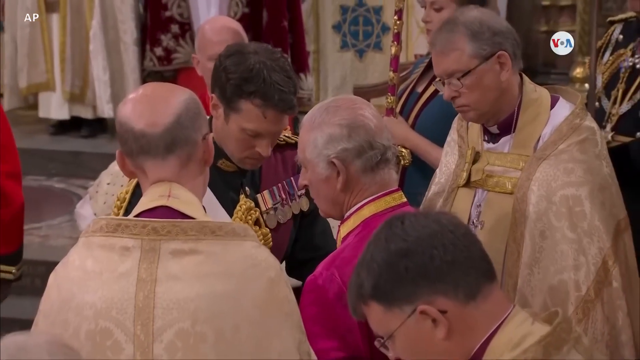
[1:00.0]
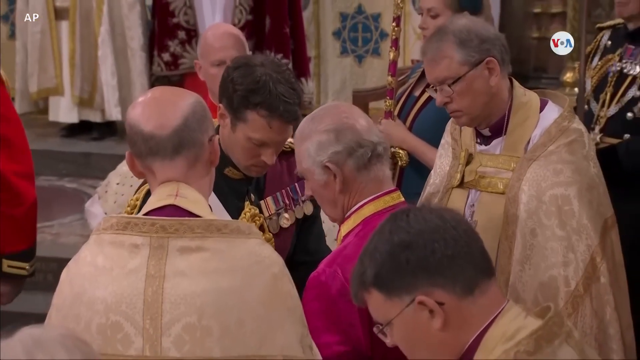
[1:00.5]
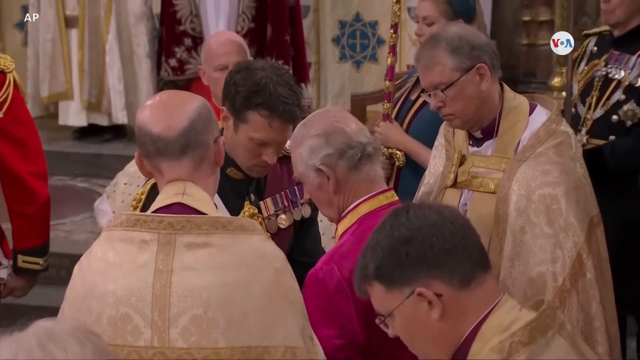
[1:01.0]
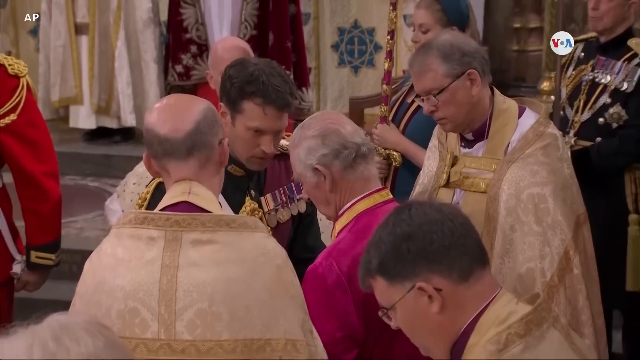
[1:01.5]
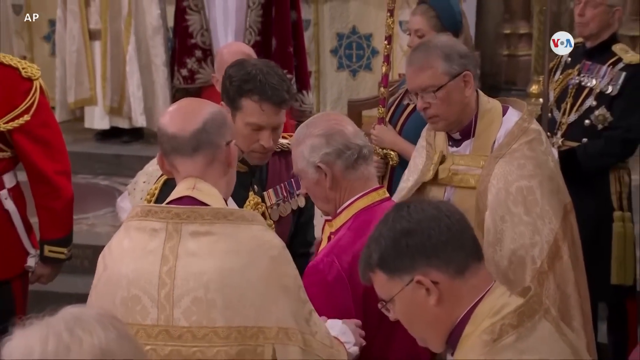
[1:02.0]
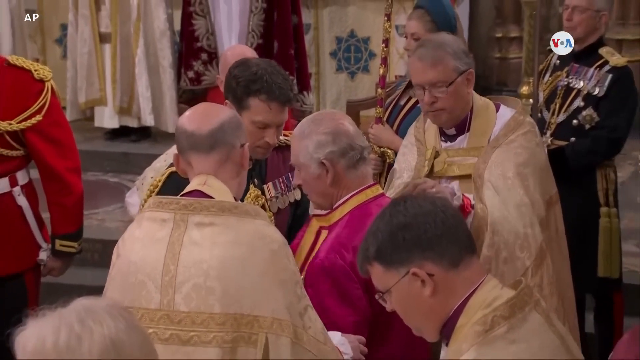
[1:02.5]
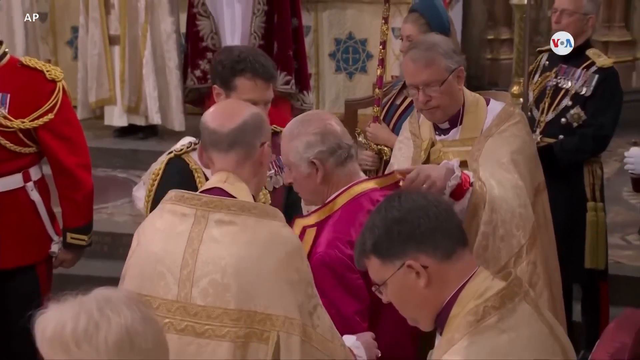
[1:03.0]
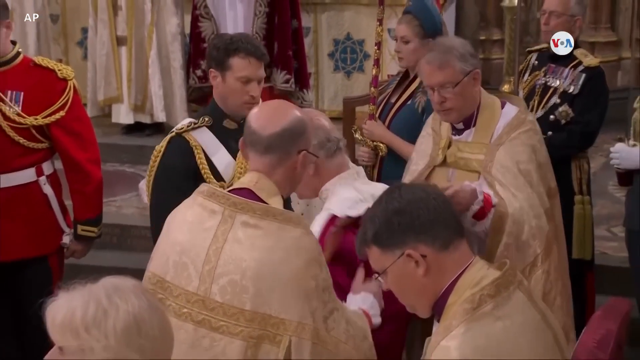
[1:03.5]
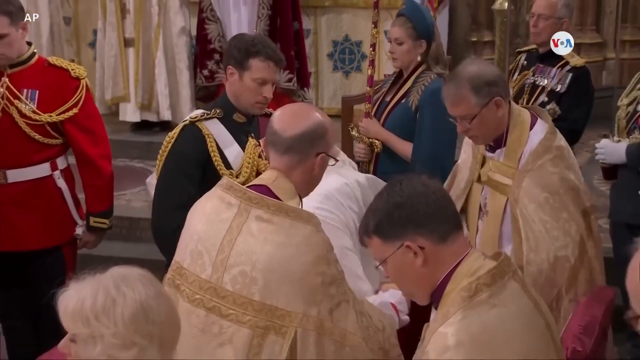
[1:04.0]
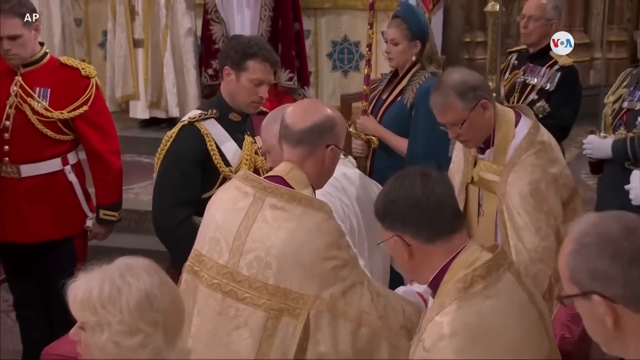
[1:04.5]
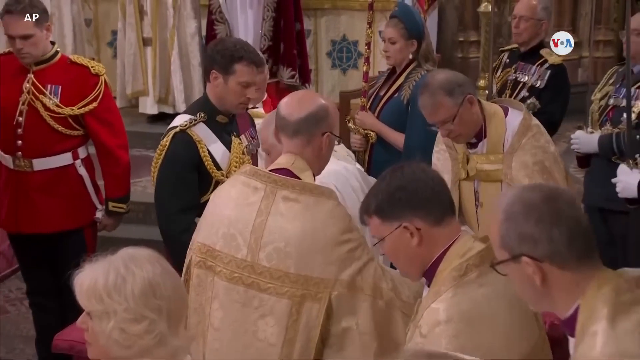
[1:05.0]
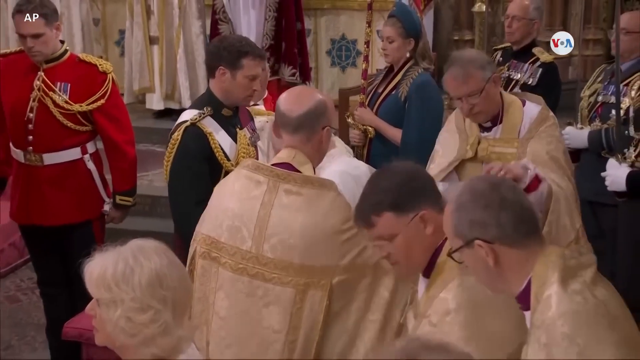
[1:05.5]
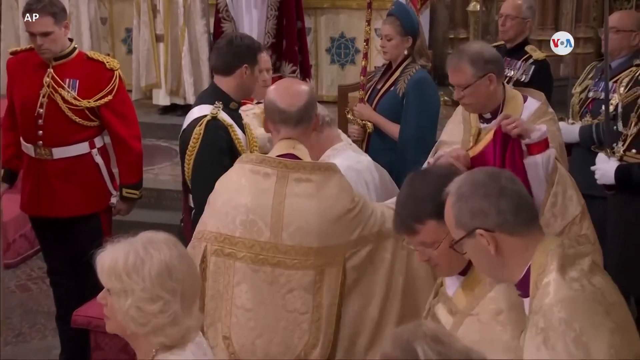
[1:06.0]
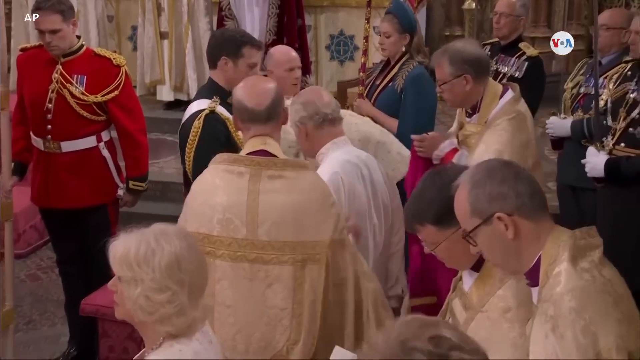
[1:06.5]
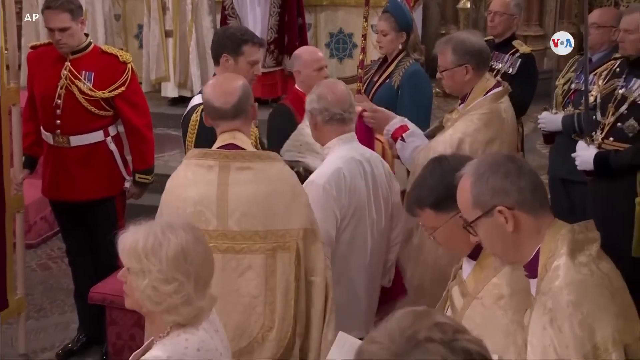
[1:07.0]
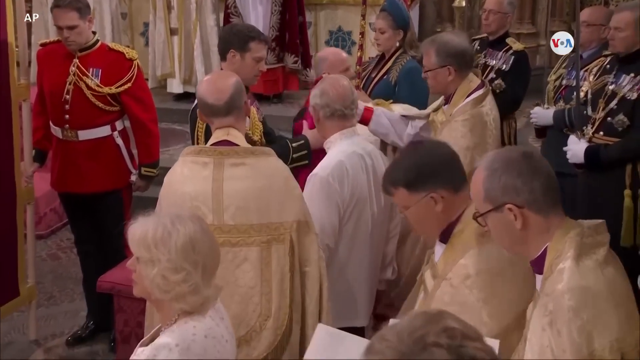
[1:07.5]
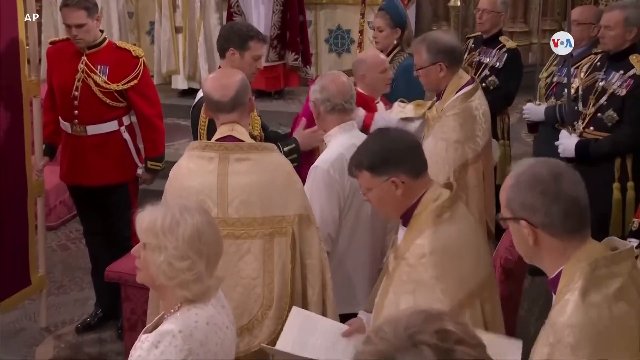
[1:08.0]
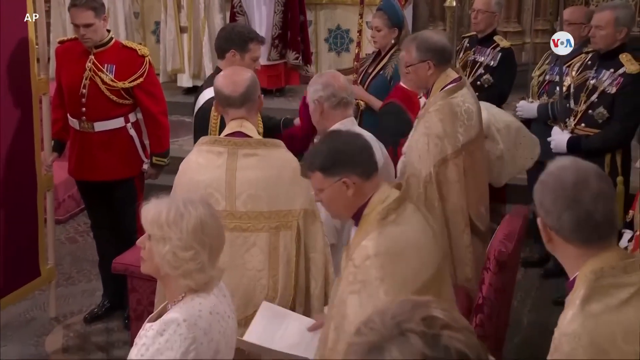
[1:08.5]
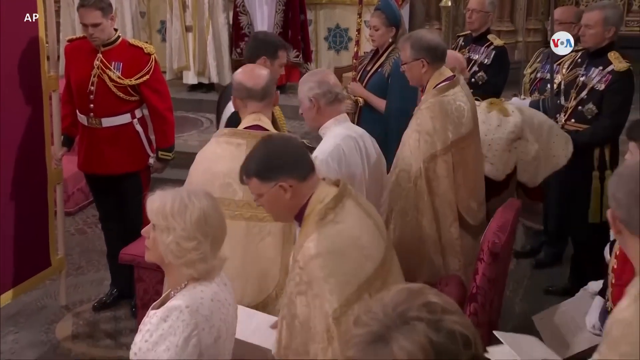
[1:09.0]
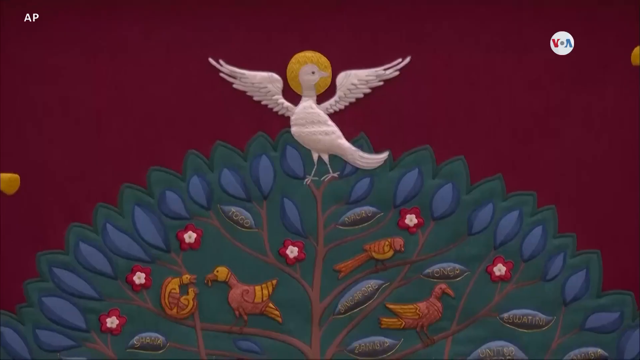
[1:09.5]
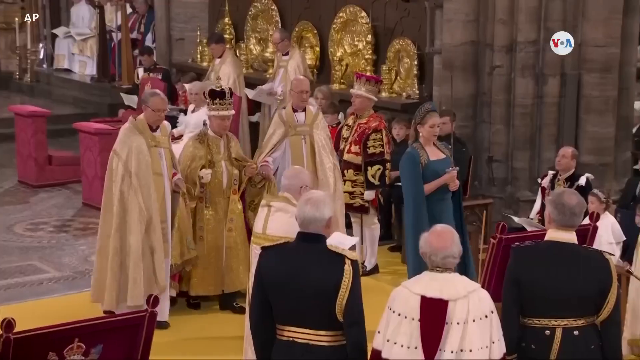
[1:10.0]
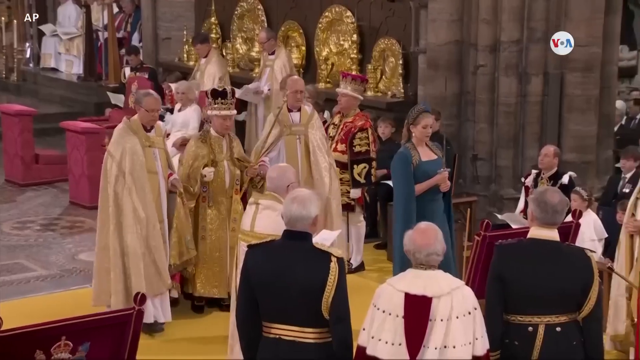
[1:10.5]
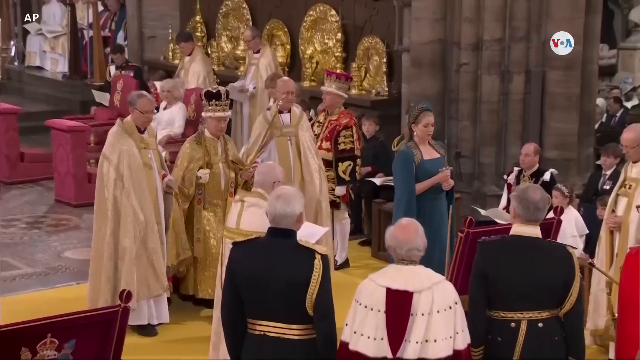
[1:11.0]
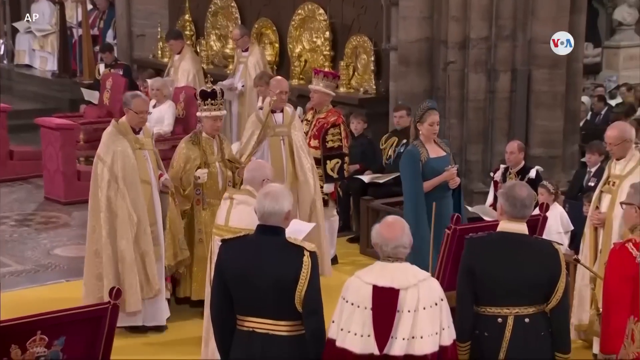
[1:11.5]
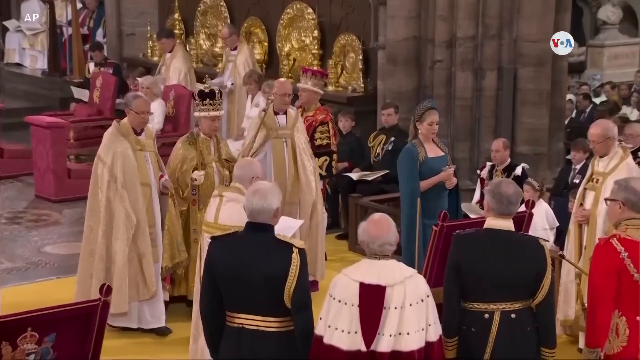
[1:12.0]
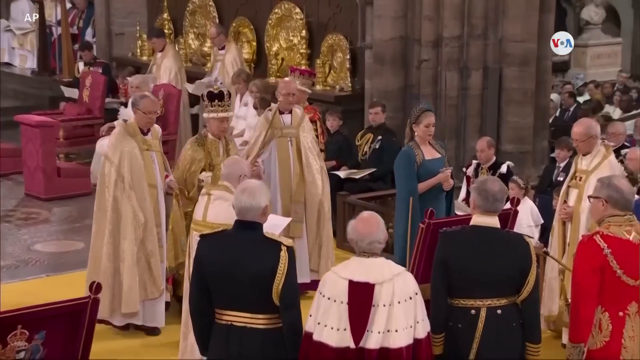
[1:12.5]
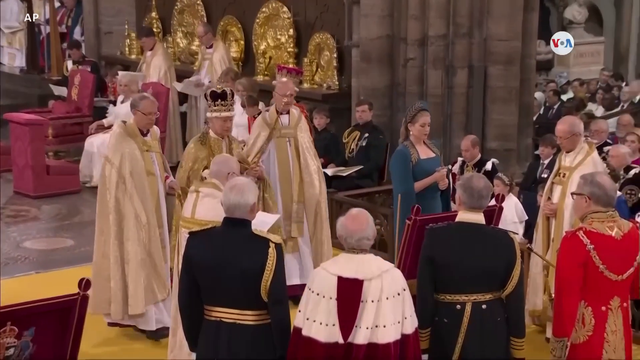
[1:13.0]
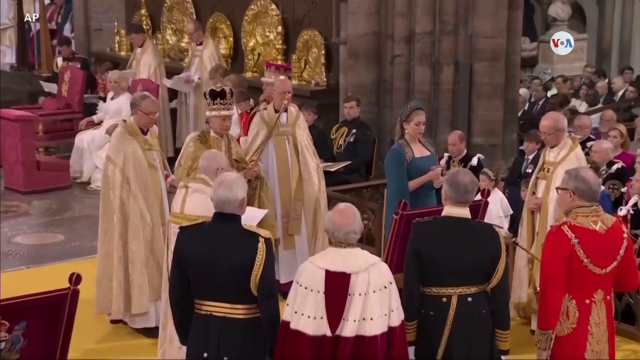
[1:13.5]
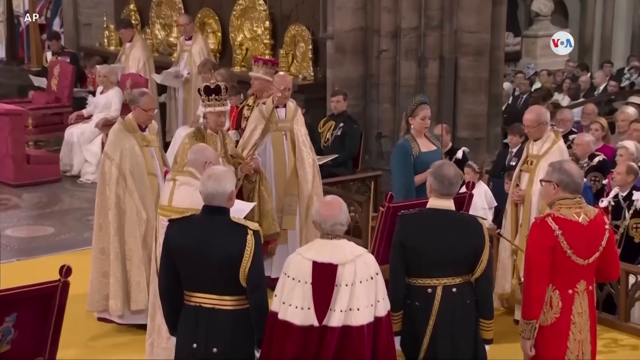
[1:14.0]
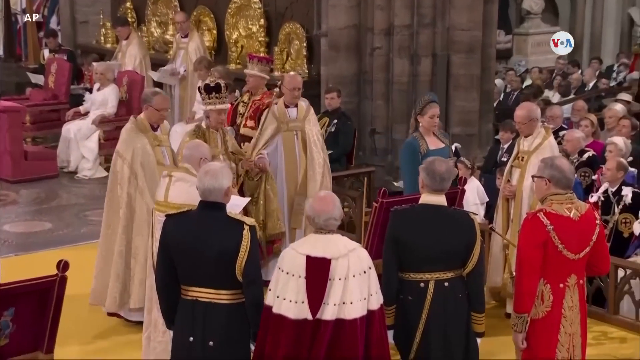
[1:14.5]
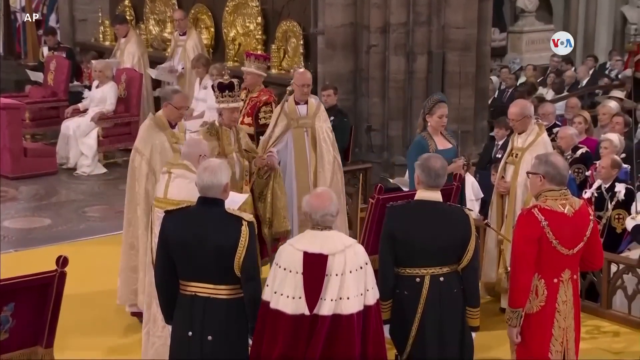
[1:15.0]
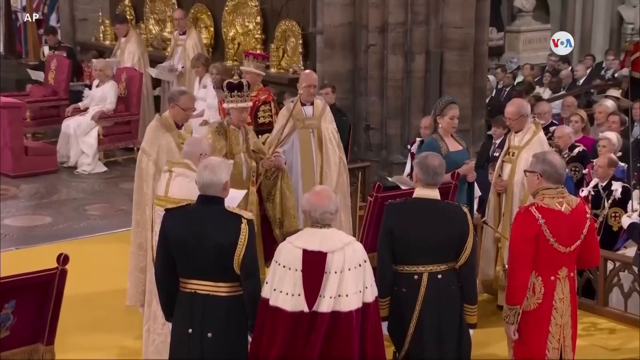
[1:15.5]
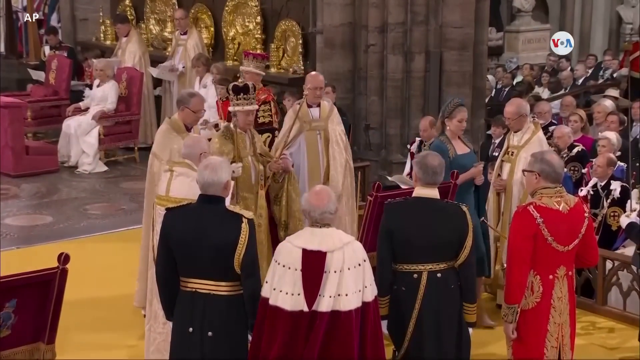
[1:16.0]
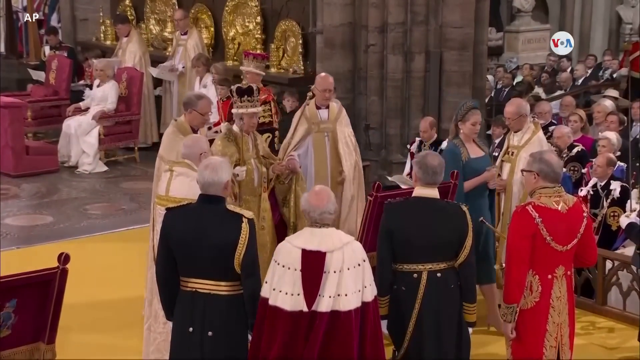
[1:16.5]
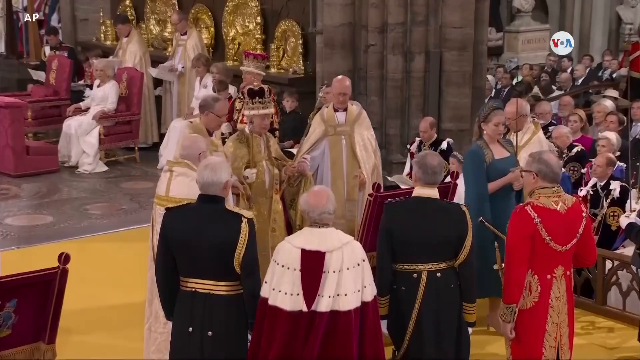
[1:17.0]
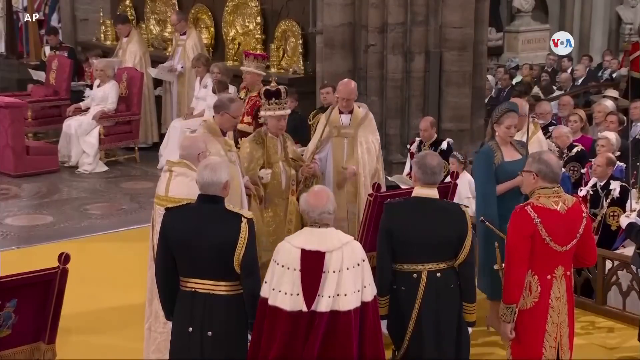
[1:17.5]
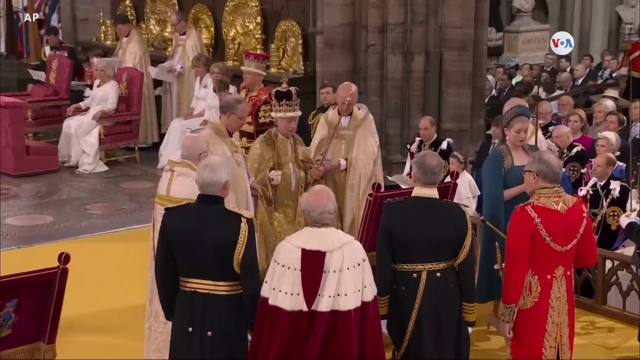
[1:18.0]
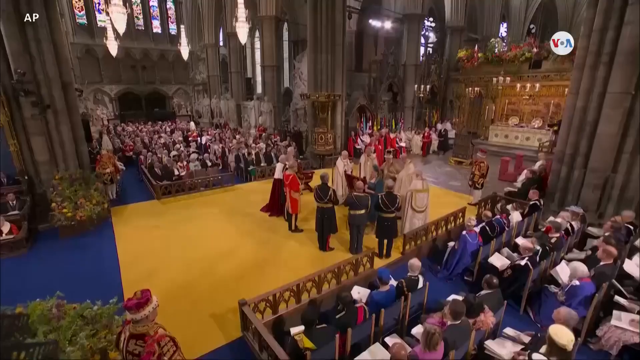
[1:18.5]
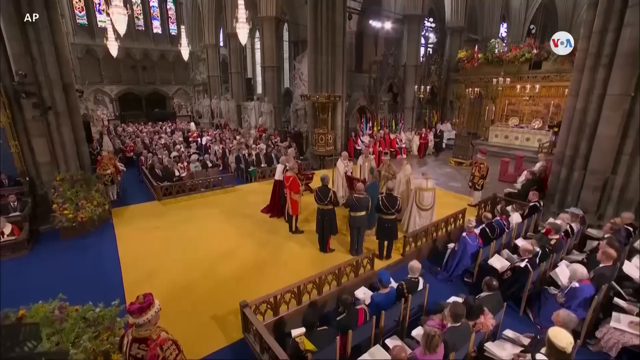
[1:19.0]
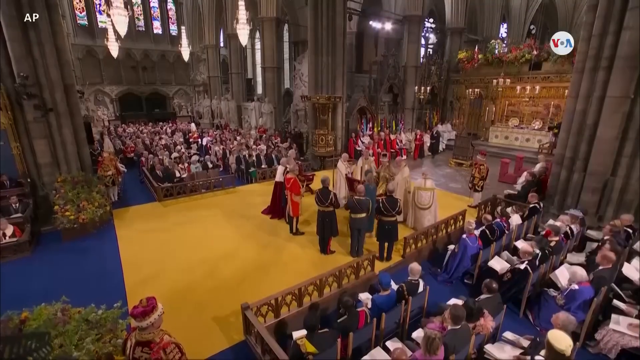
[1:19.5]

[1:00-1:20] King Charles stands with four men around him. Two men in cloaks seem to be taking some clothing off him, and they take what looks like a pink jacket from him, revealing his white shirt underneath. There are some soldiers in front of him. To his right is Penny Morton, an MP, in a striking blue suit and hat, holding a purple and gold rod that looks rather heavy at a 90-degree angle. The video cuts to what looks like a close-up of a design: a white bird with gold around its head and wings stretched out on top of a clearly artificial tree, apparently embroidered, with other birds below it and some red flowers. Then the King walks down an aisle wearing a gold robe, the crown on his head and a gold rod in his left hand. Two men in sandy-coloured cloaks flank and help him, whether holding him up or keeping him or the crown balanced is unclear. Penny Morton, in her blue and yellow dress, walks in front of them holding the rod aloft. A medium long shot shows the figures standing in the middle of the hall on a yellow carpet, with the guests seated around them.